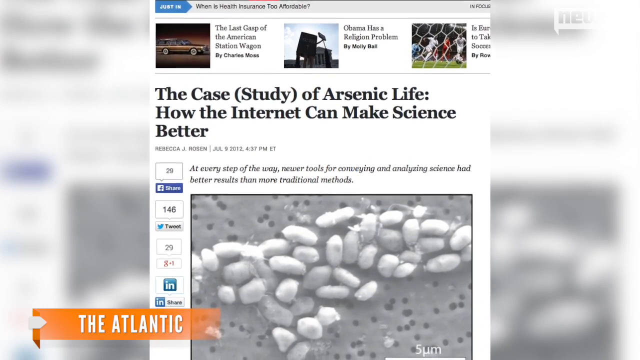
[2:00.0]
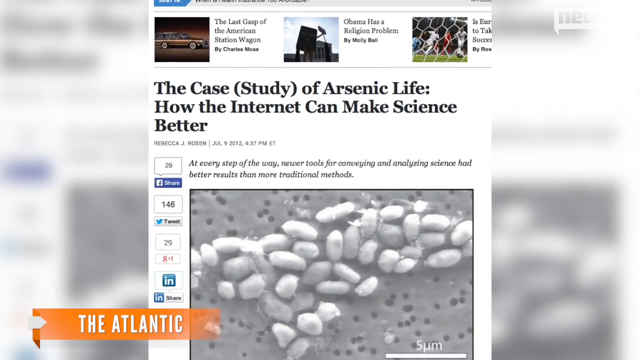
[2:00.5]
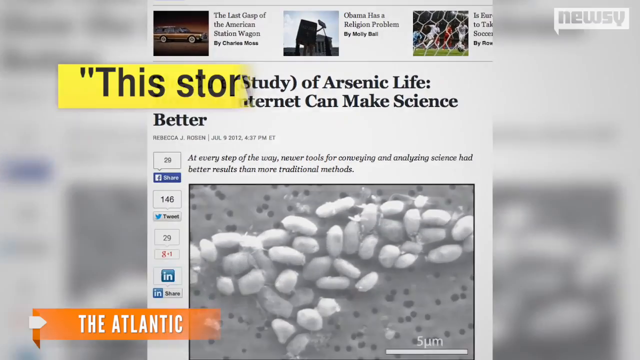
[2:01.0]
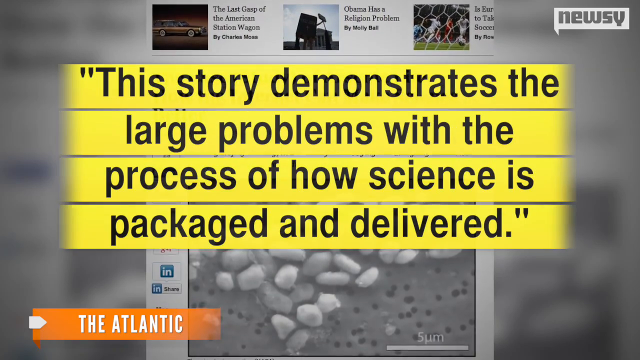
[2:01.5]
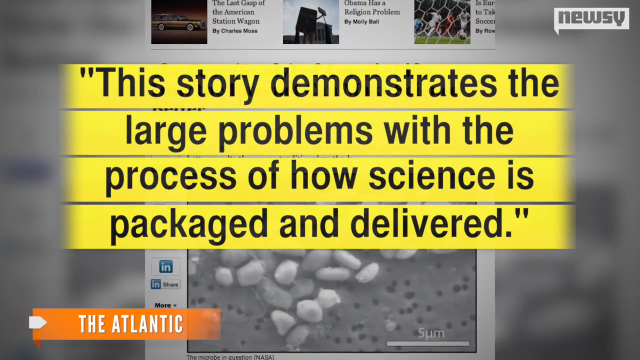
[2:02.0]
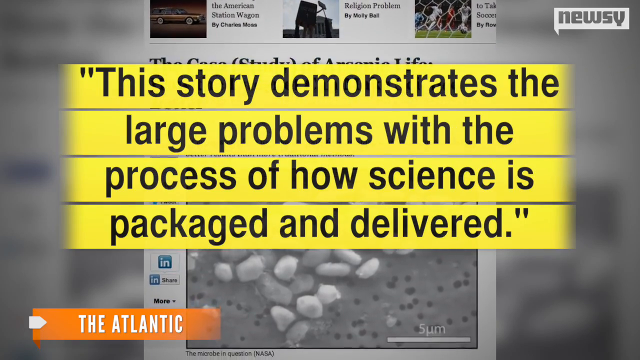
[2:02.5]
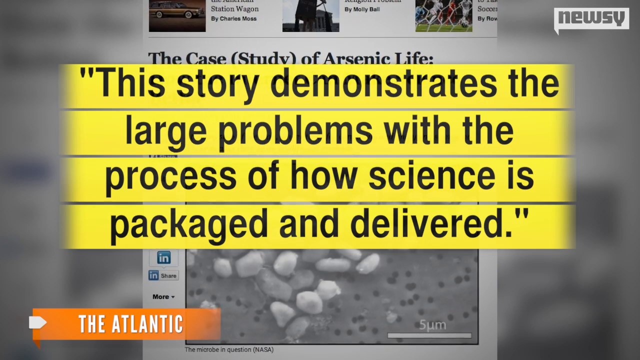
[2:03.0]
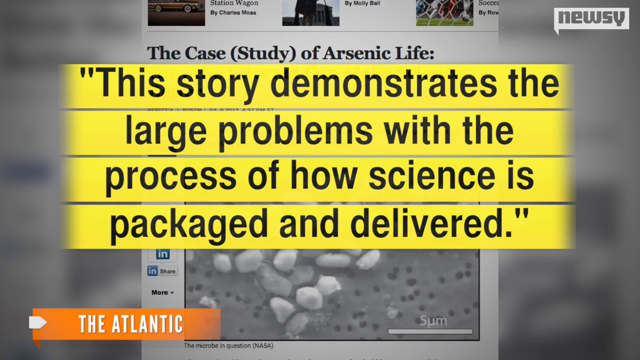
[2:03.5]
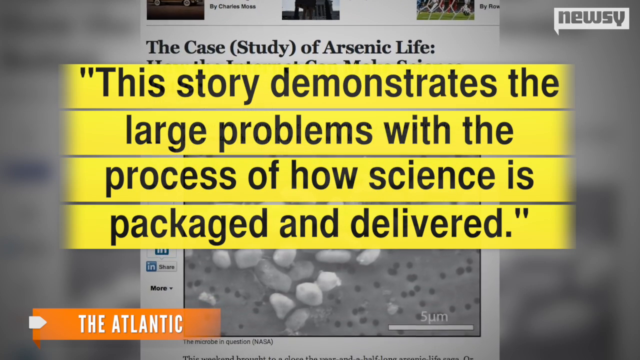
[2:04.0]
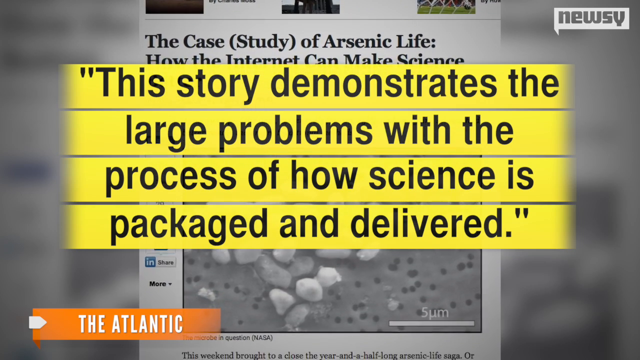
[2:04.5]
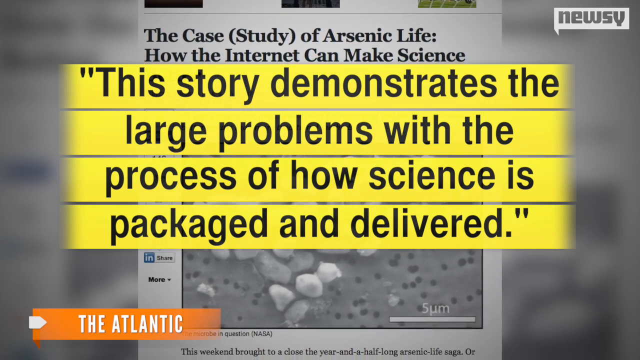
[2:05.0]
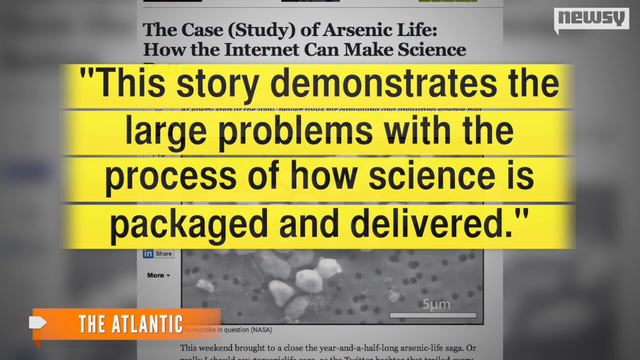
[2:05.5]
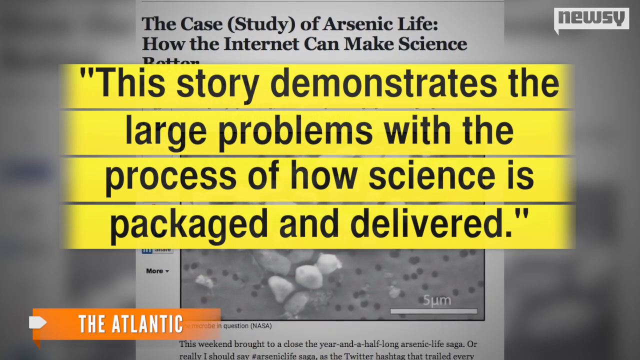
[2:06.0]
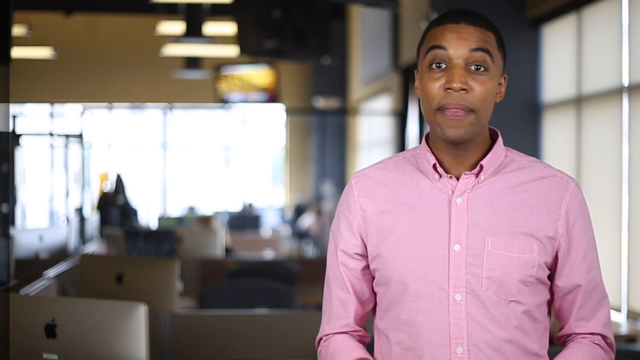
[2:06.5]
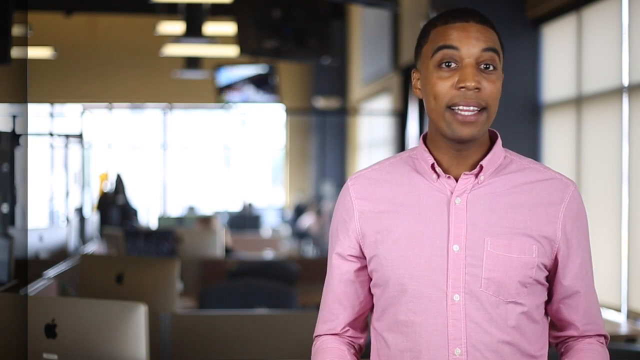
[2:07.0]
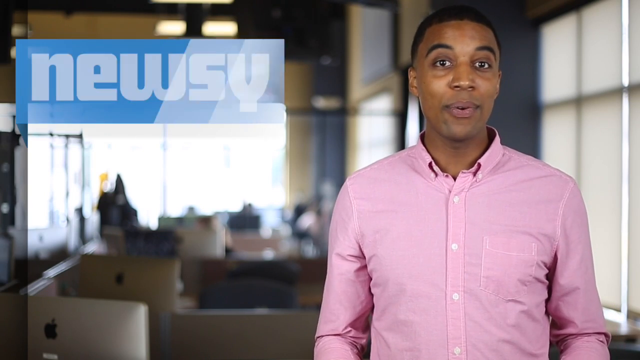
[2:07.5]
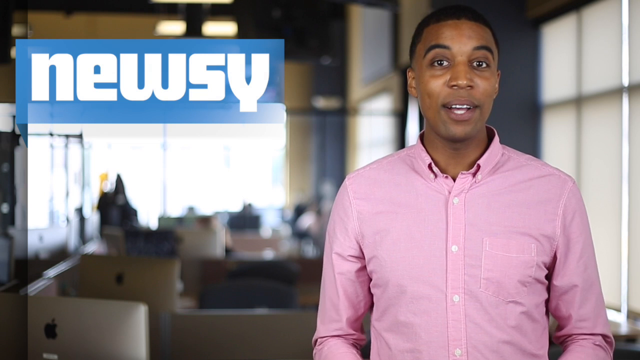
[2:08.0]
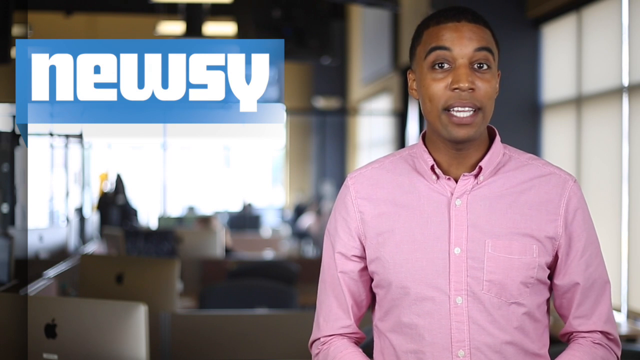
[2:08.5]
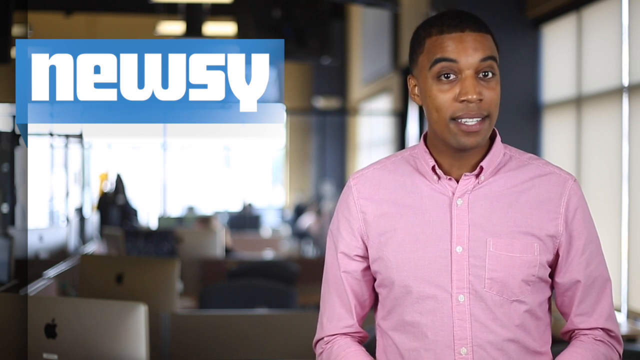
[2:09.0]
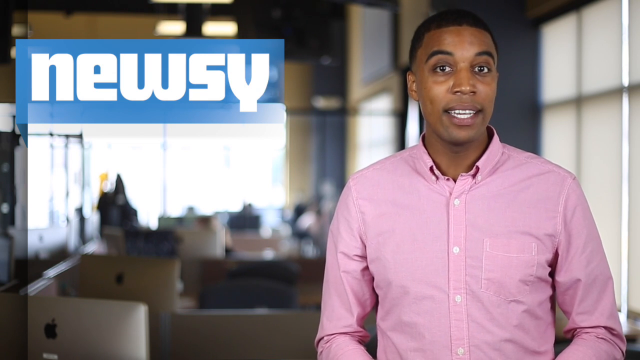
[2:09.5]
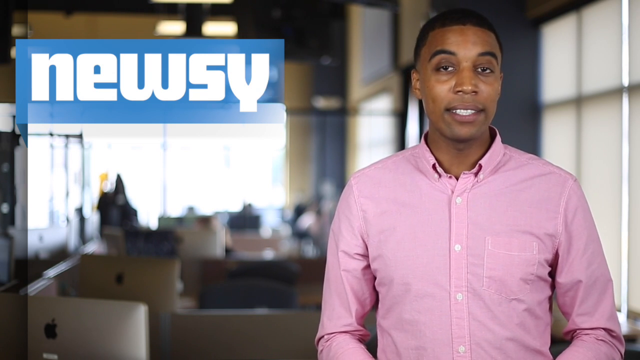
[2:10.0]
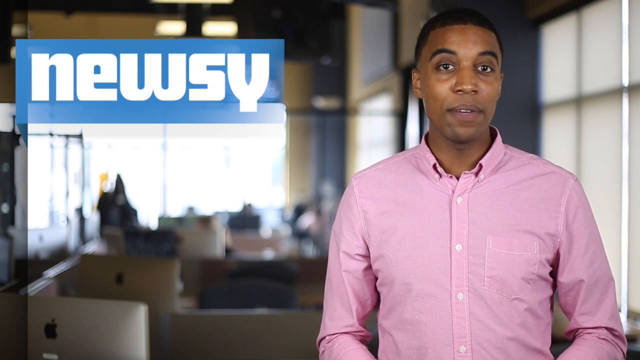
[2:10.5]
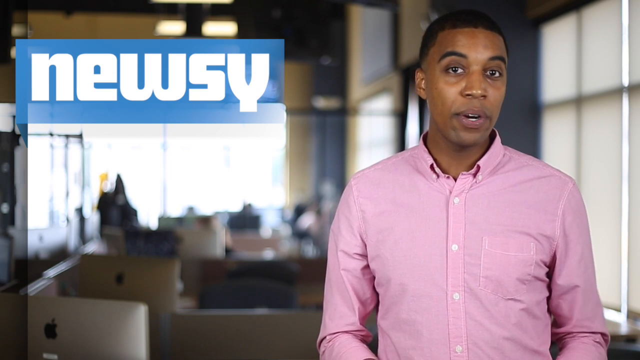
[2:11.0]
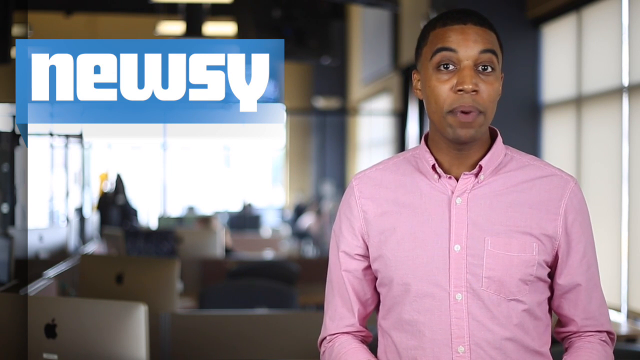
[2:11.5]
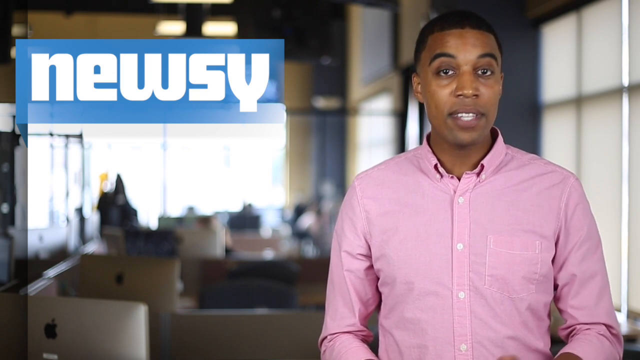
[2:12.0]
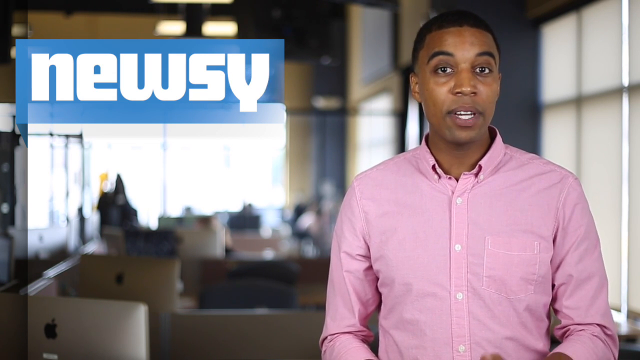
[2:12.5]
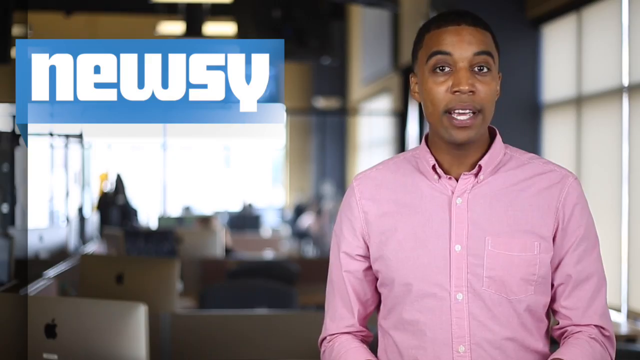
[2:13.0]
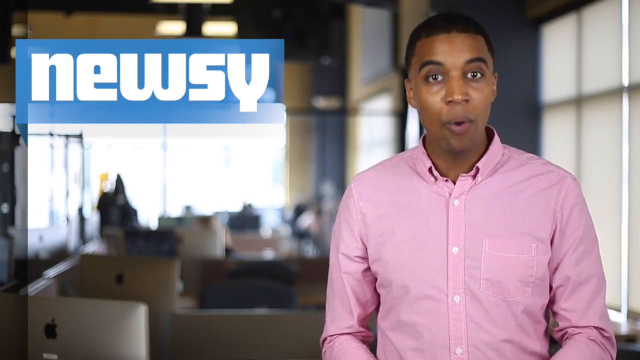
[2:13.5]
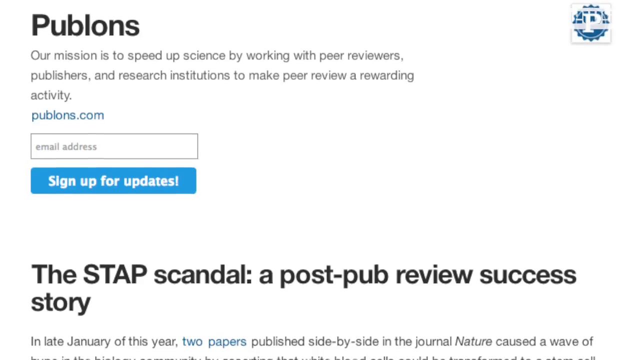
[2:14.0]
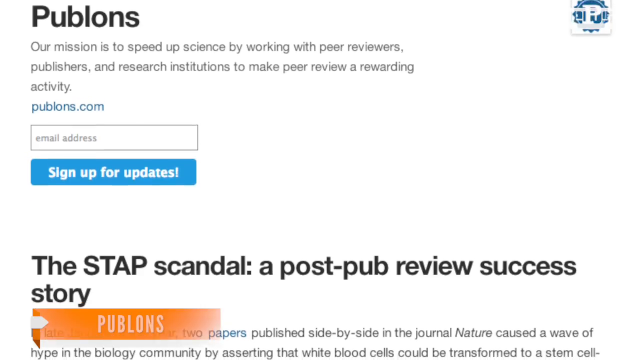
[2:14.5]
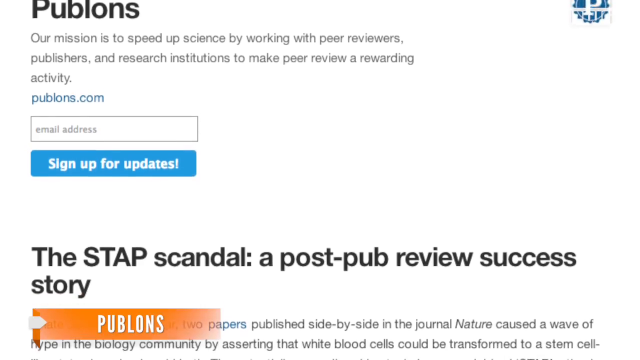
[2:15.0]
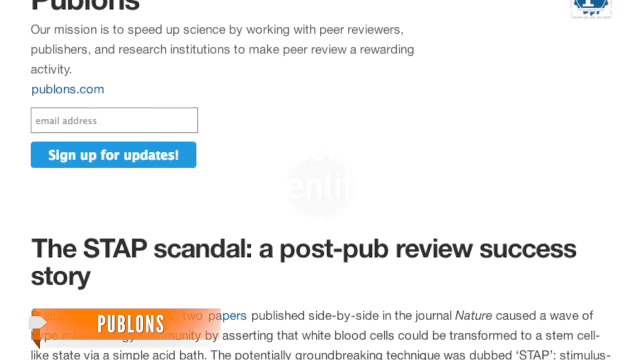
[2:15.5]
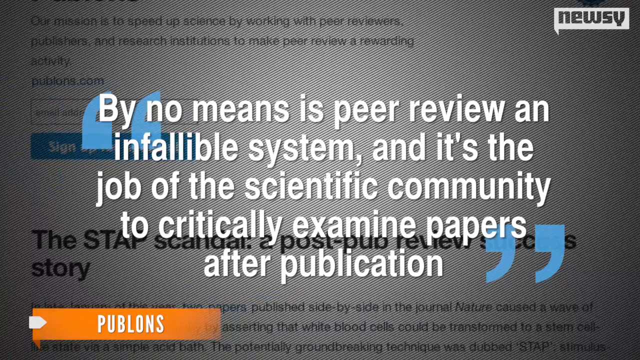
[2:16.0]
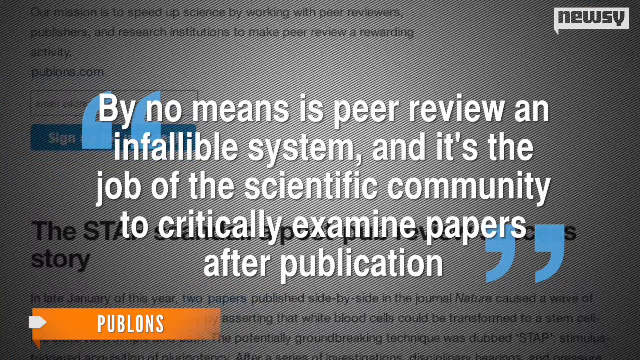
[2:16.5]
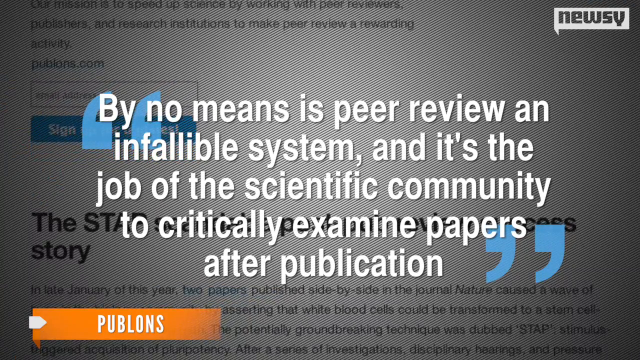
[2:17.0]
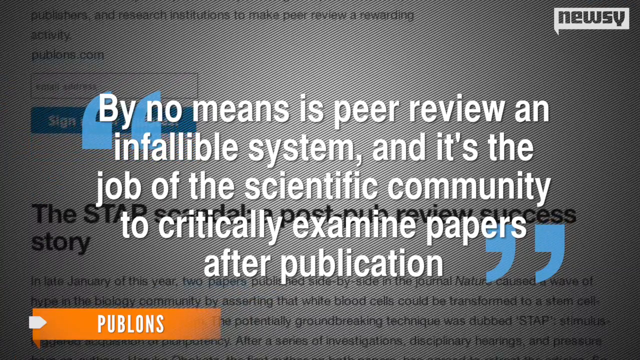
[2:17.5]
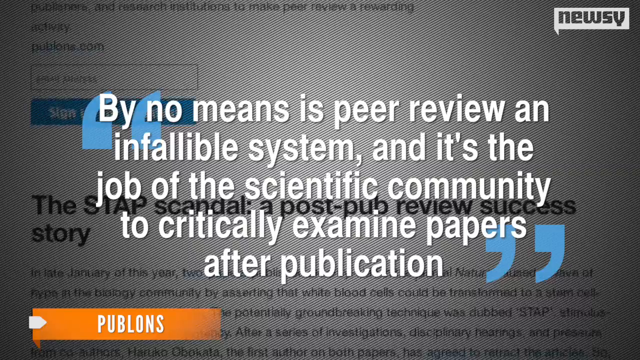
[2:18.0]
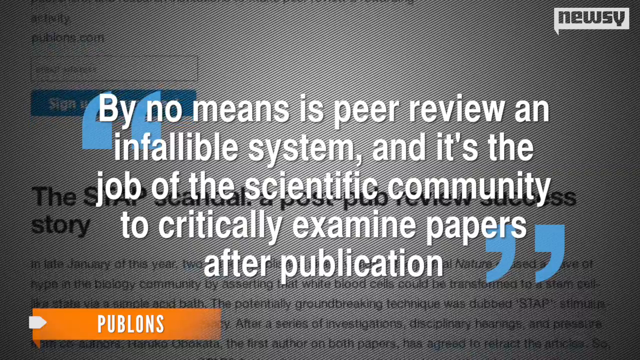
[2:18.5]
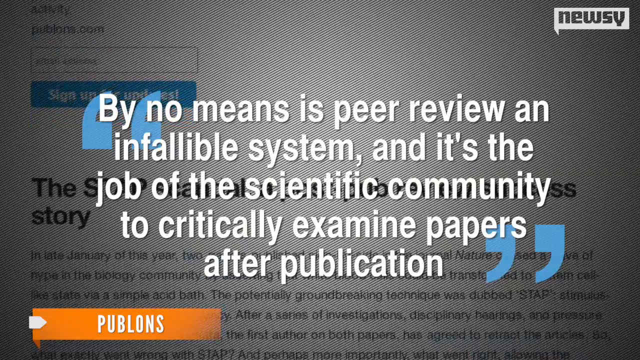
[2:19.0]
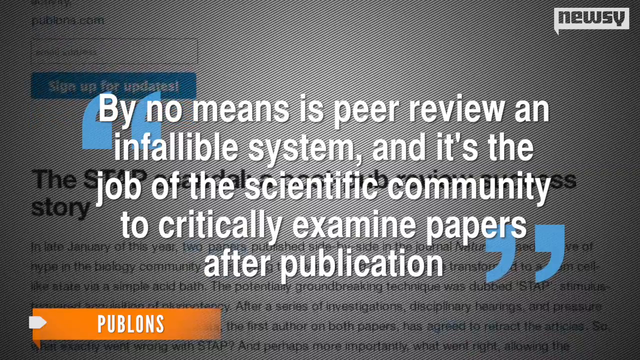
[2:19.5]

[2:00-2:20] An article, apparently from the Atlantic, reads "the case study of arsenic life, how the internet can make science better" and "At every step of the way, newer tools for conveying and analyzing science have better results than more traditional methods. The story demonstrates the large problems with the process of how science is packaged and delivered." The Newsy news reporter, an African-American man in a pink shirt, then talks on screen by himself. Another article follows, titled "the STAP scandal a post-pub review success story," reading "by no means is peer review an infallible system and it's the job of the scientific community to critically examine papers after publication."